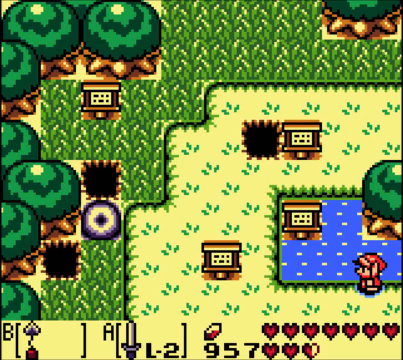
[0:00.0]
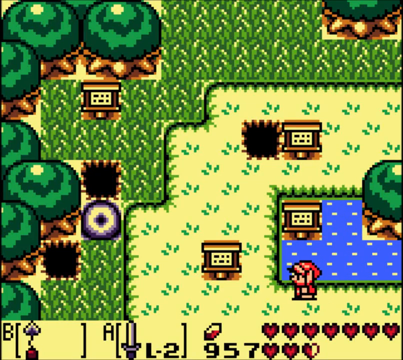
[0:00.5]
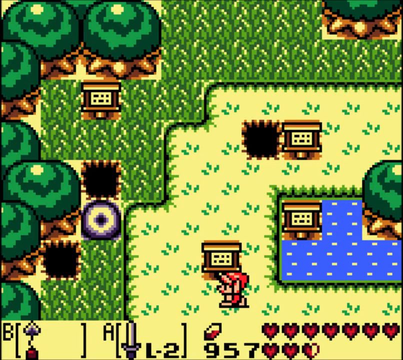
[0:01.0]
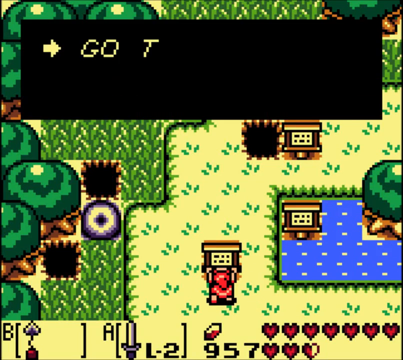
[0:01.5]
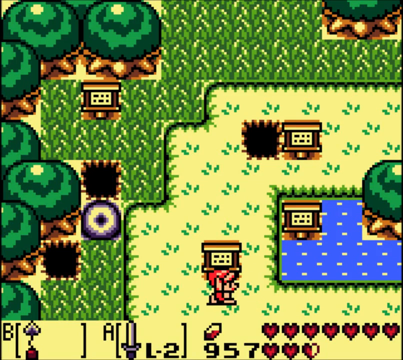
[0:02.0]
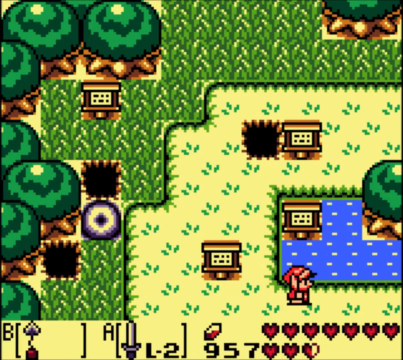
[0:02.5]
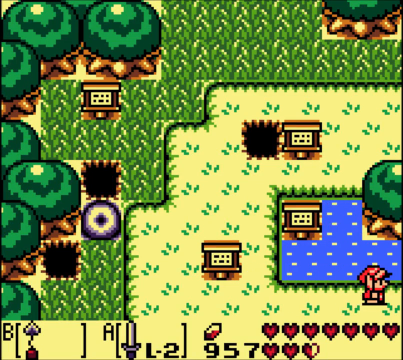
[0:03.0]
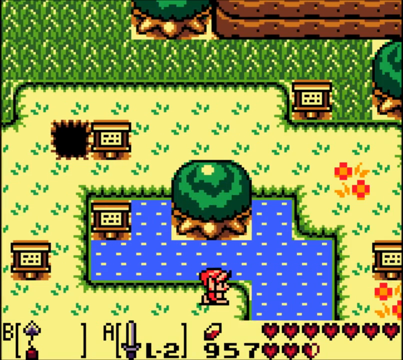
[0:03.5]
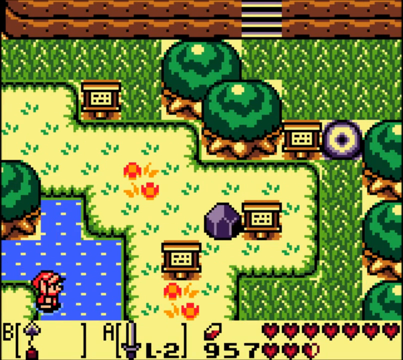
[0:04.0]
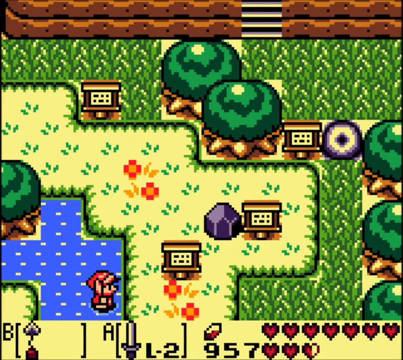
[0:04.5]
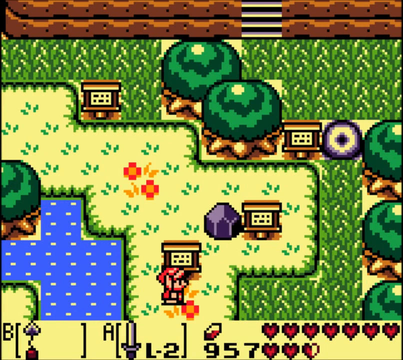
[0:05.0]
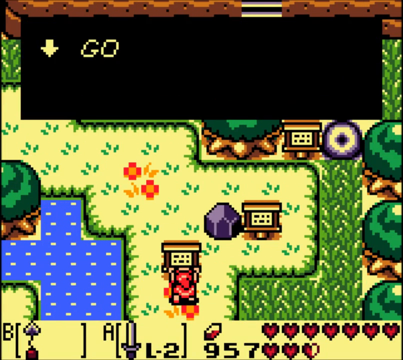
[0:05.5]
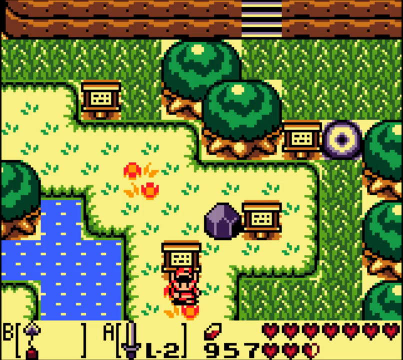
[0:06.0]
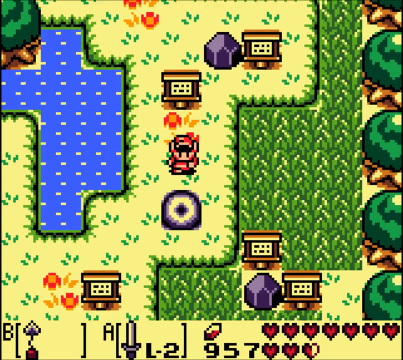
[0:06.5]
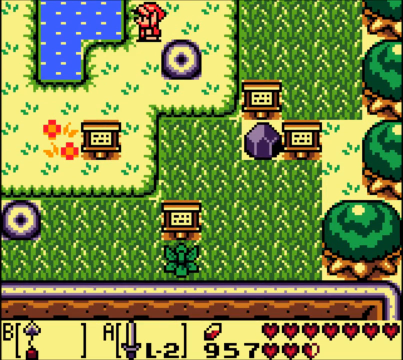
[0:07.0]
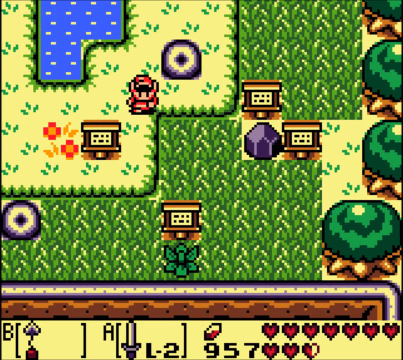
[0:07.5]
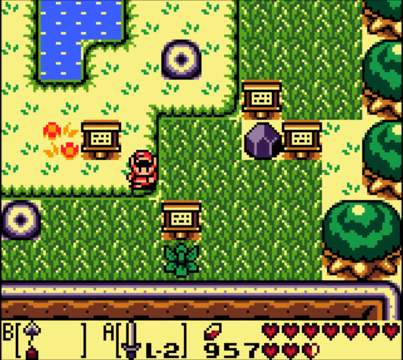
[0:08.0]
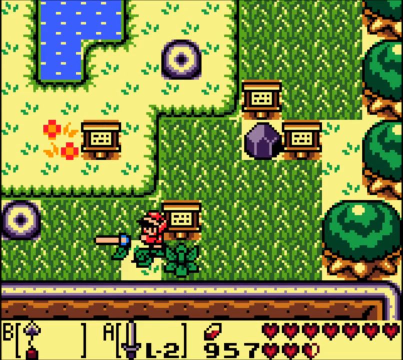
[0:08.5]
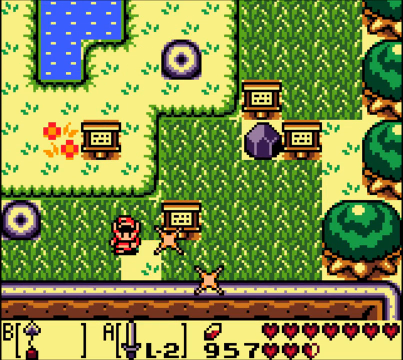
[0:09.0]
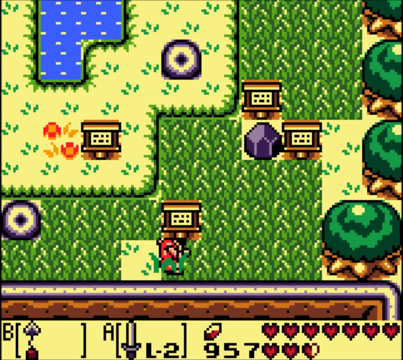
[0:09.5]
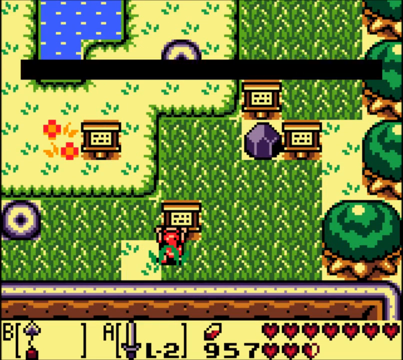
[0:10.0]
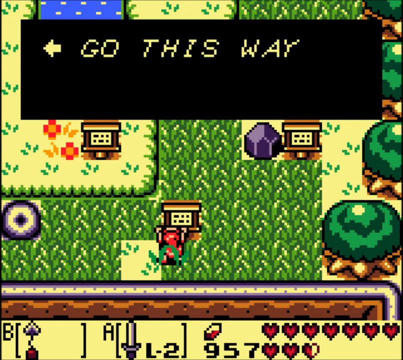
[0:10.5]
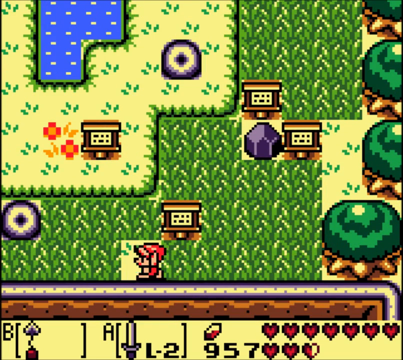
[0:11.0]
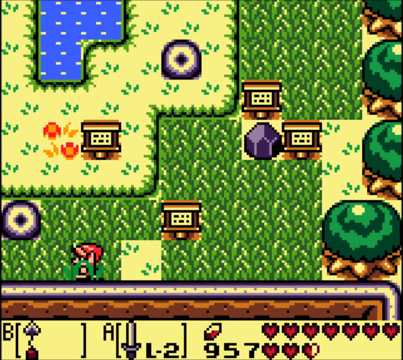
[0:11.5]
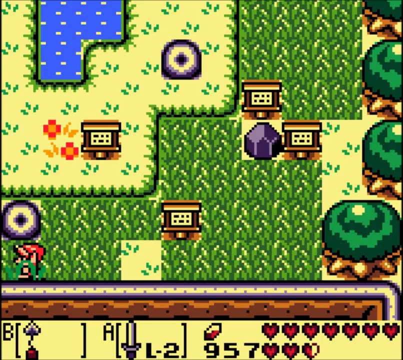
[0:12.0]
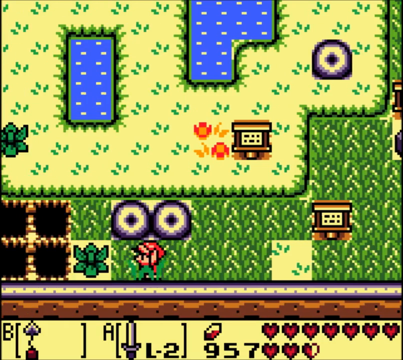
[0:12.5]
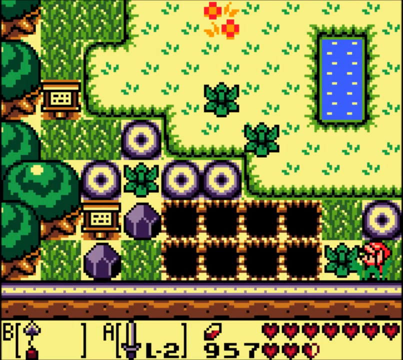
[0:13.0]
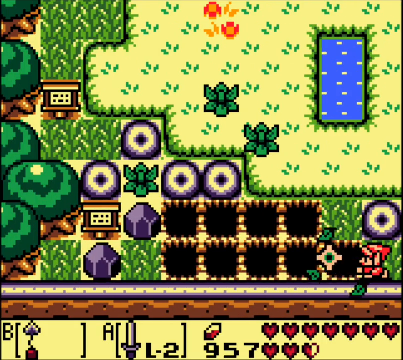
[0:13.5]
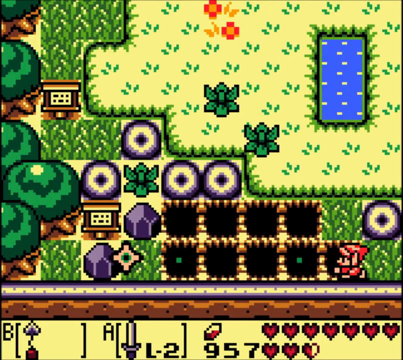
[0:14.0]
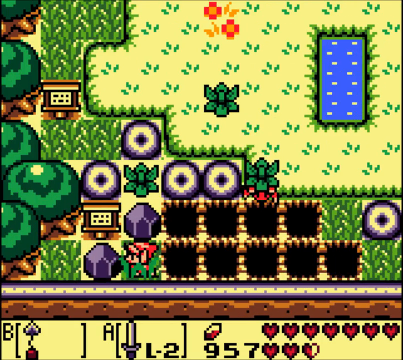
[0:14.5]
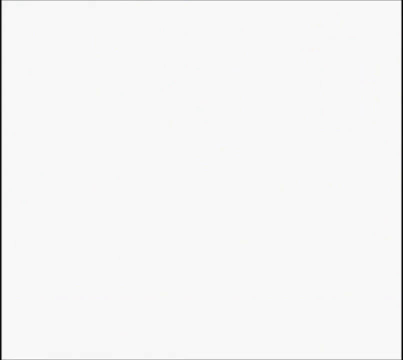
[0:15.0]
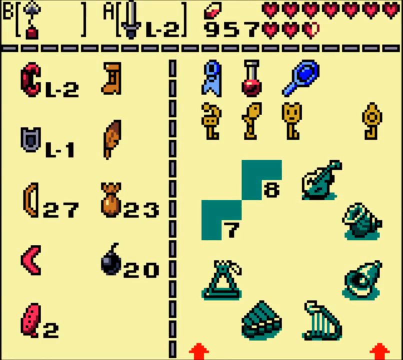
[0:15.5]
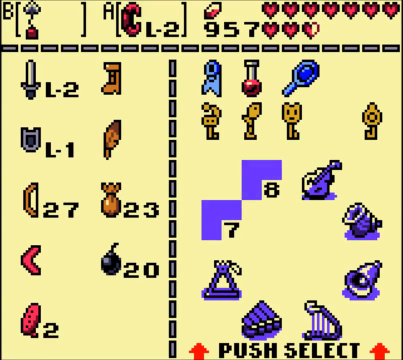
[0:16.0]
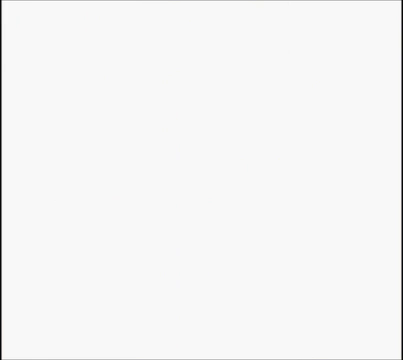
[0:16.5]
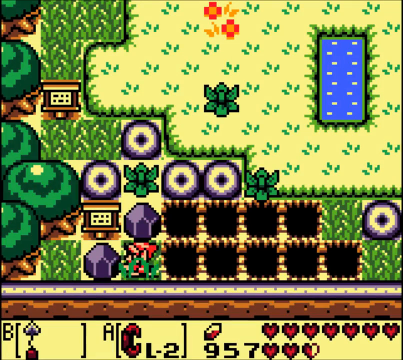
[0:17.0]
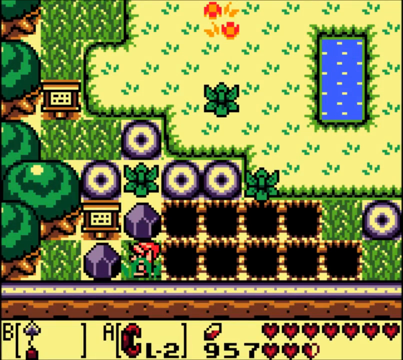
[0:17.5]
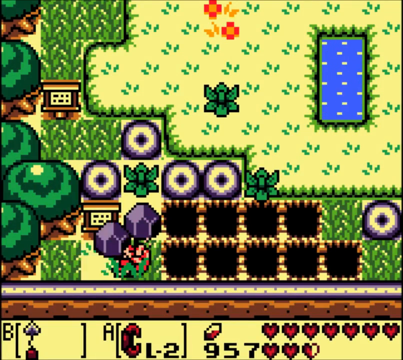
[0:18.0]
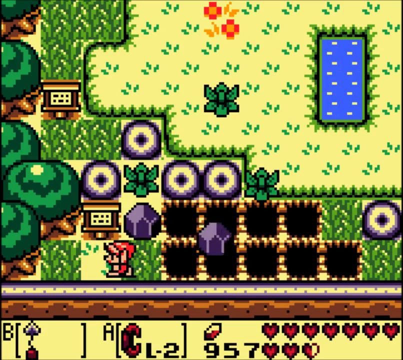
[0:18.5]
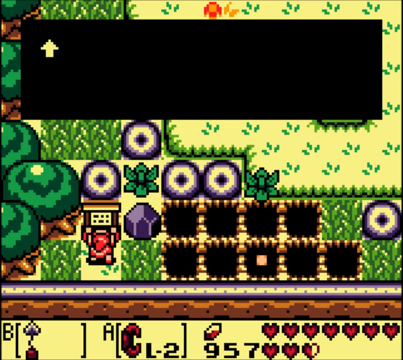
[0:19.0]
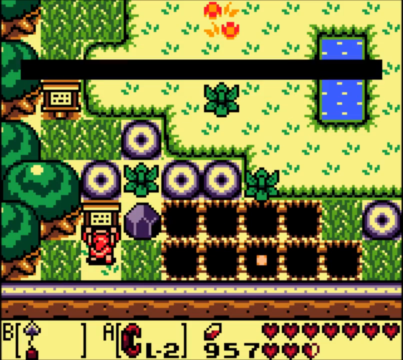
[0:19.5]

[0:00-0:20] Gameplay of an 8- or 16-bit retro-style video game features a small humanoid protagonist dressed in red. The play area suggests a farming or island setting: there is an area of trees on the right-hand side of the screen, to the left of that and extending to the top of the screen is some grassland or possibly growing crops, to the right of that is a sandier area, and at the lower right of the screen is an area of blue representing water. There appear to be four notice boards in the play area. At the foot of the screen, seven hearts indicate seven lives. The character stops at one of the signposts, which reads "Go this way," and moves in the suggested direction. He reads another signpost directing him down the screen and moves that way.